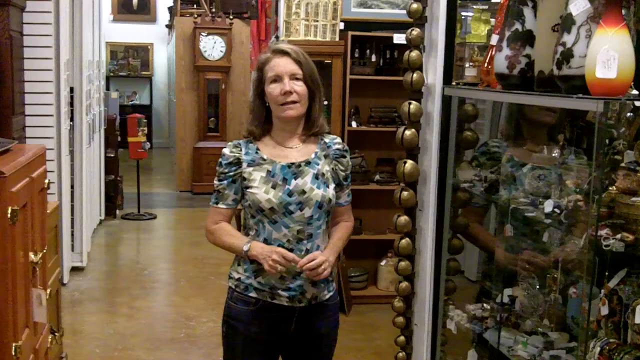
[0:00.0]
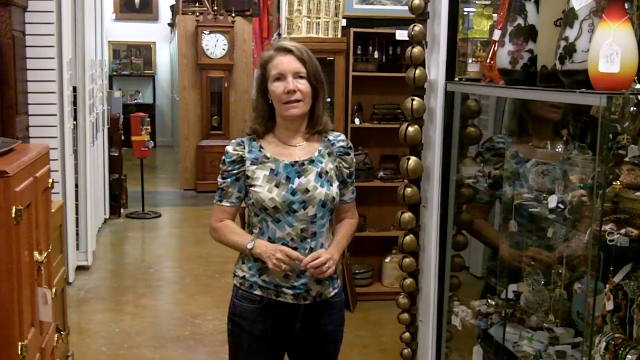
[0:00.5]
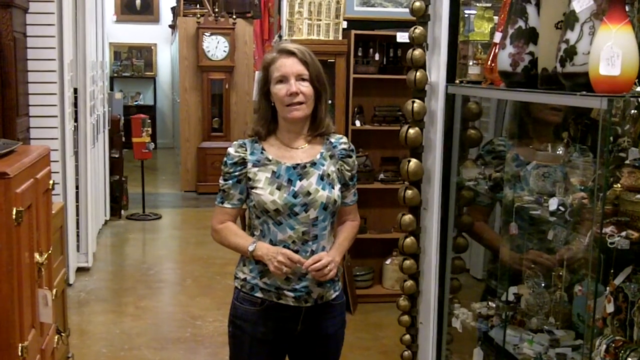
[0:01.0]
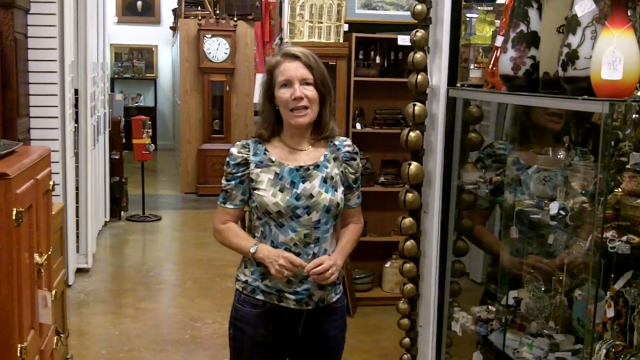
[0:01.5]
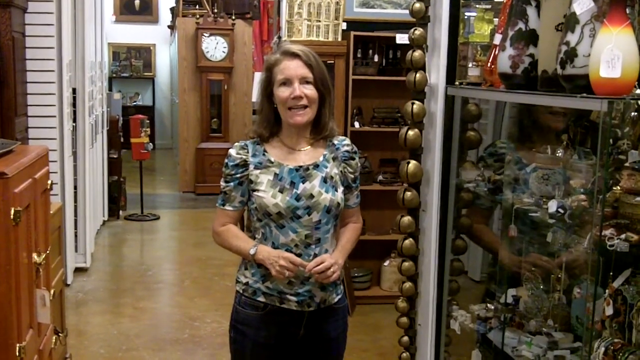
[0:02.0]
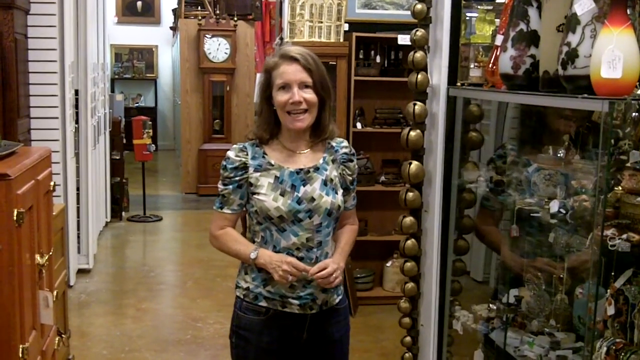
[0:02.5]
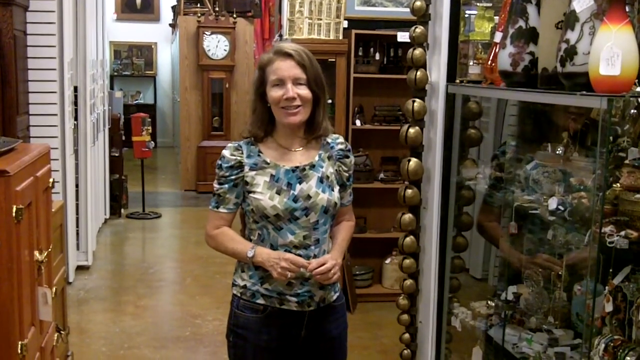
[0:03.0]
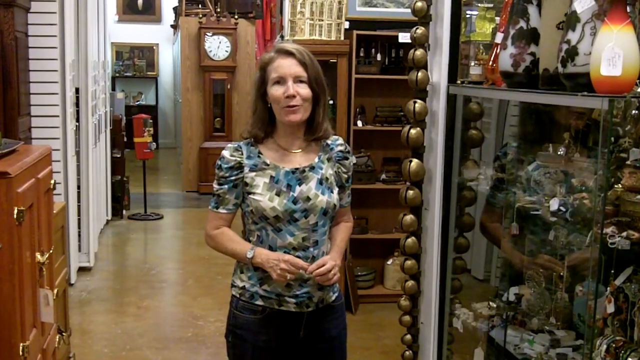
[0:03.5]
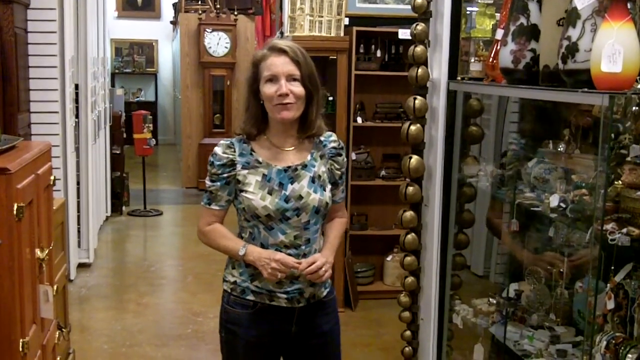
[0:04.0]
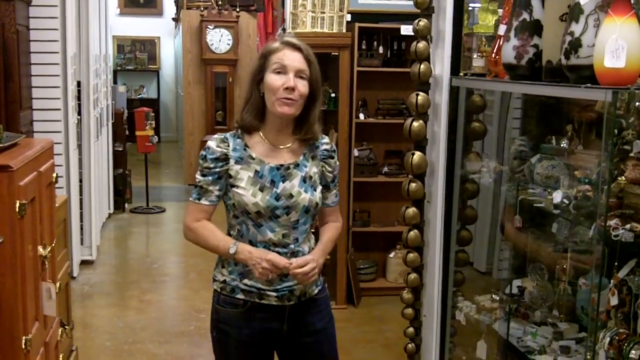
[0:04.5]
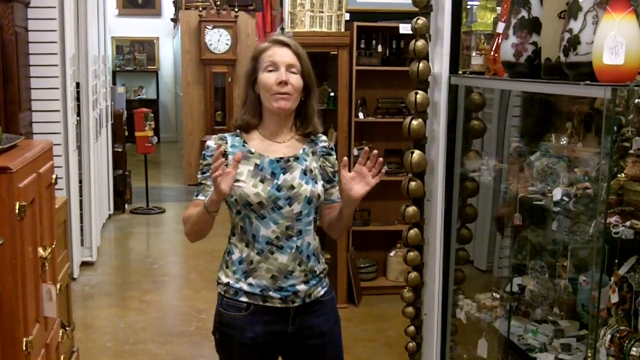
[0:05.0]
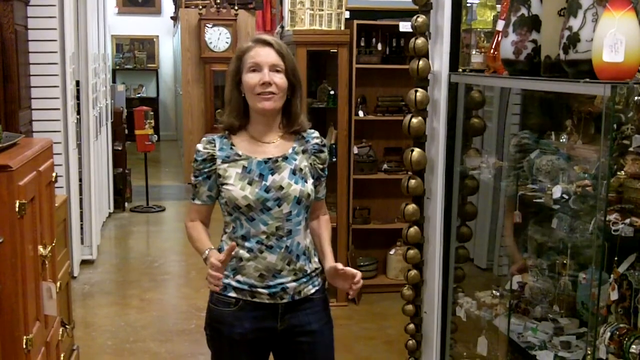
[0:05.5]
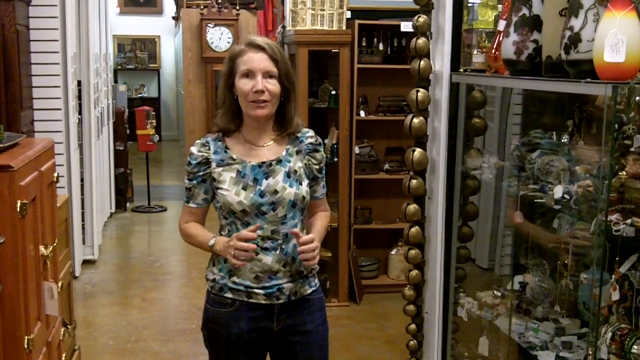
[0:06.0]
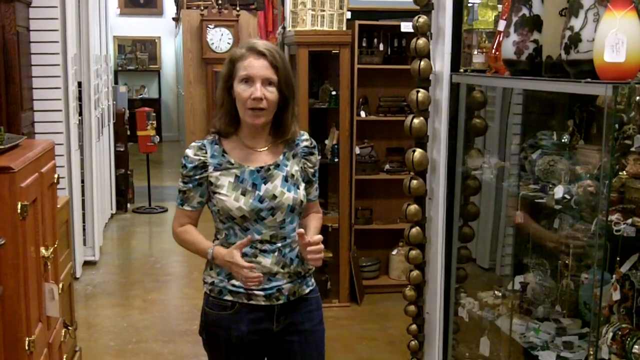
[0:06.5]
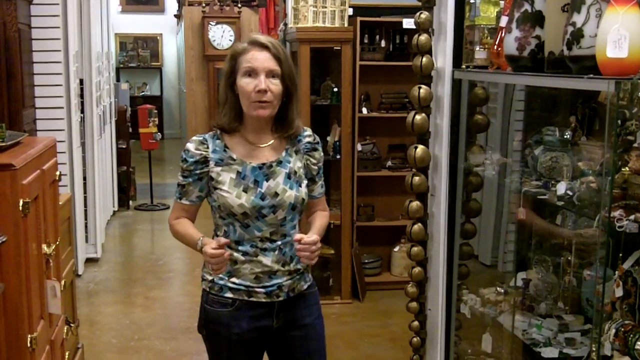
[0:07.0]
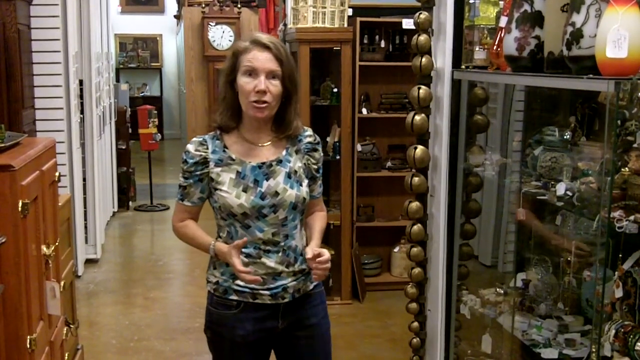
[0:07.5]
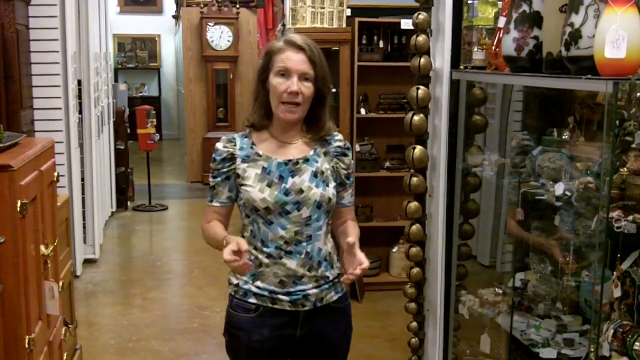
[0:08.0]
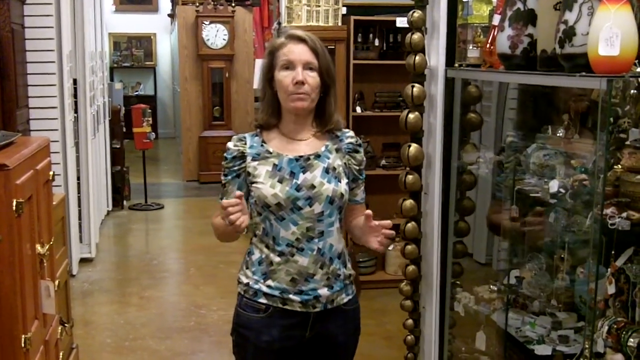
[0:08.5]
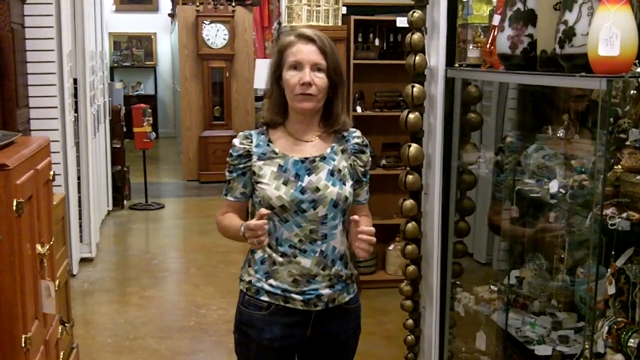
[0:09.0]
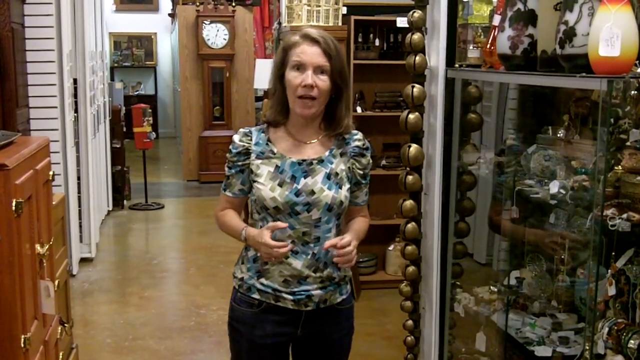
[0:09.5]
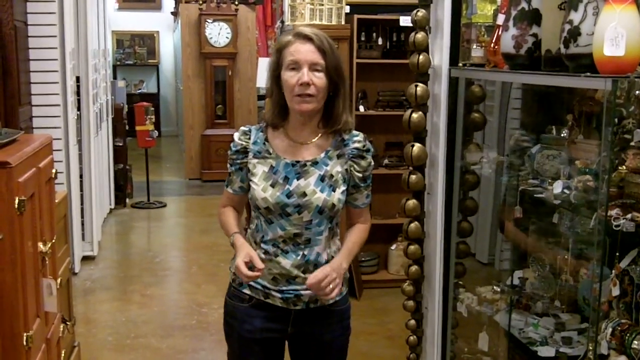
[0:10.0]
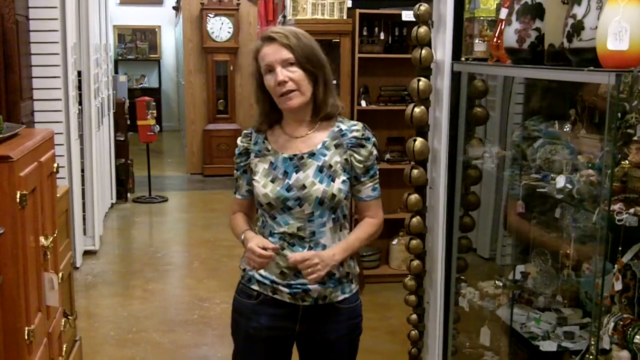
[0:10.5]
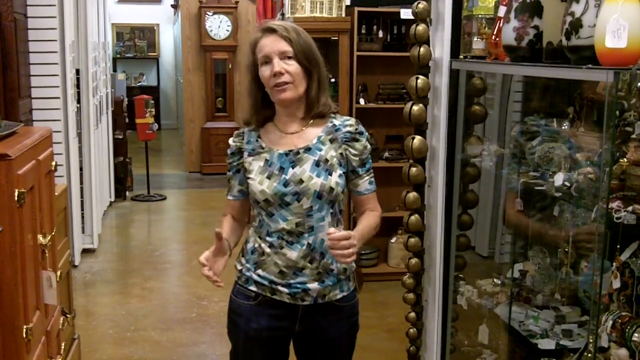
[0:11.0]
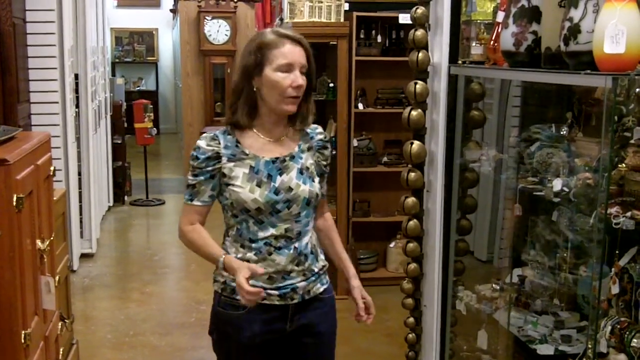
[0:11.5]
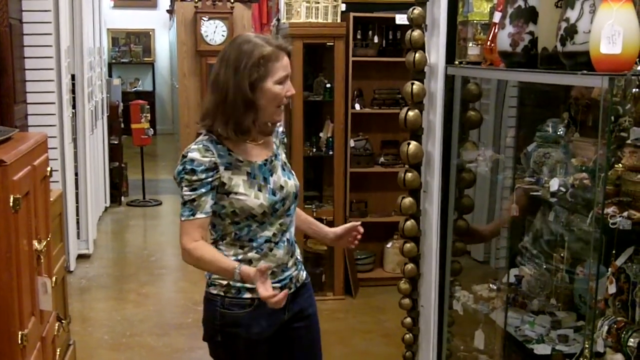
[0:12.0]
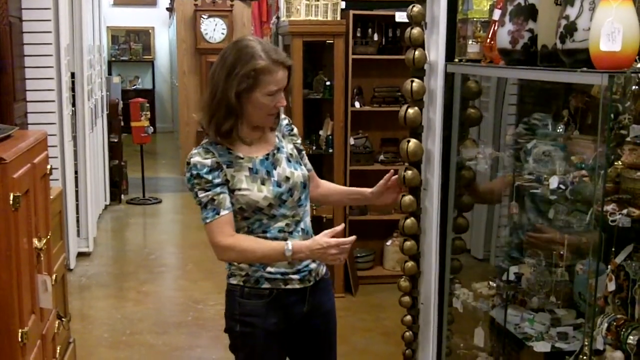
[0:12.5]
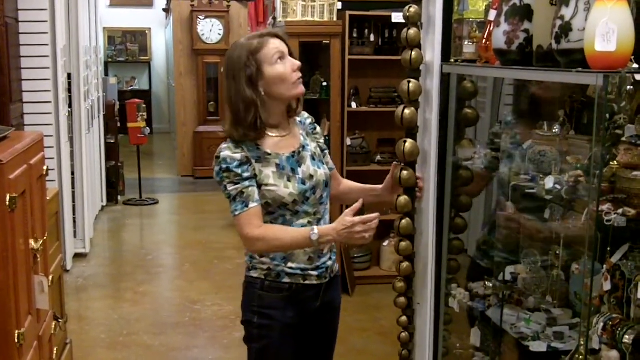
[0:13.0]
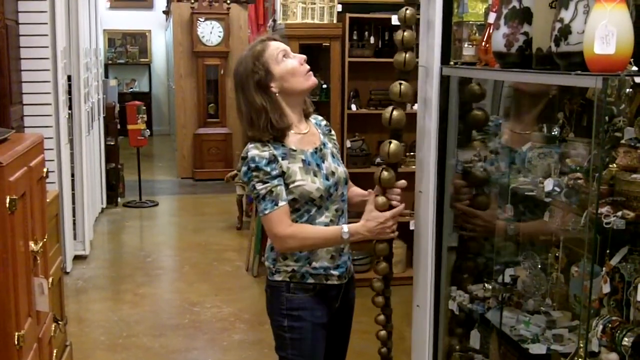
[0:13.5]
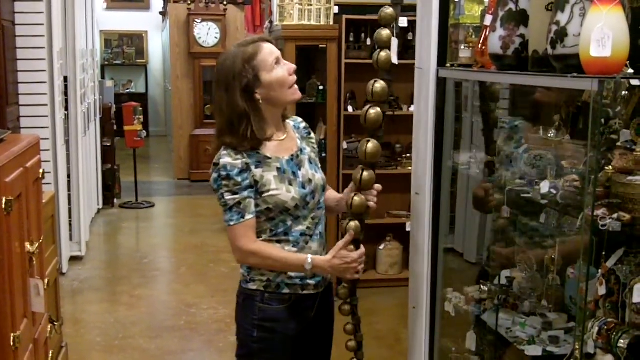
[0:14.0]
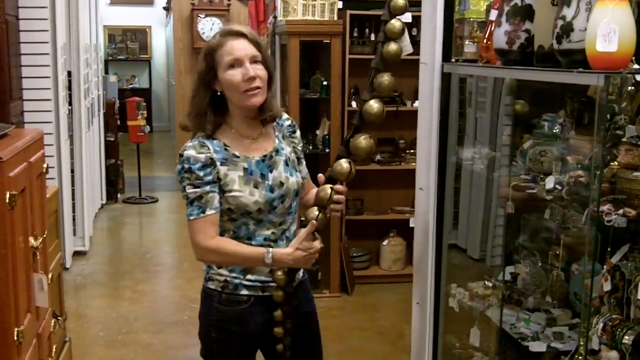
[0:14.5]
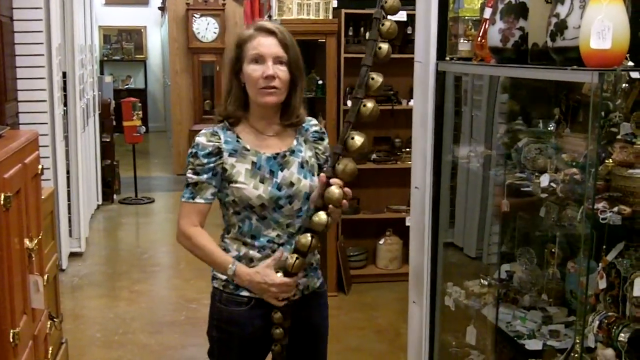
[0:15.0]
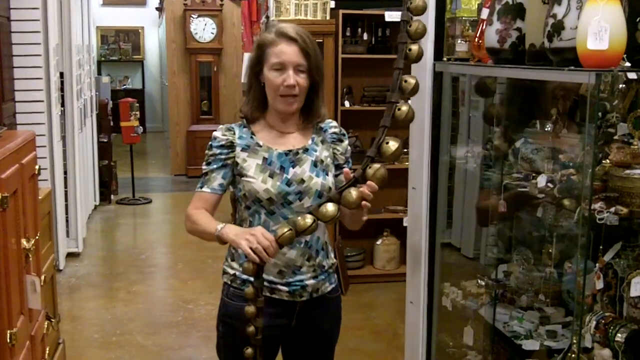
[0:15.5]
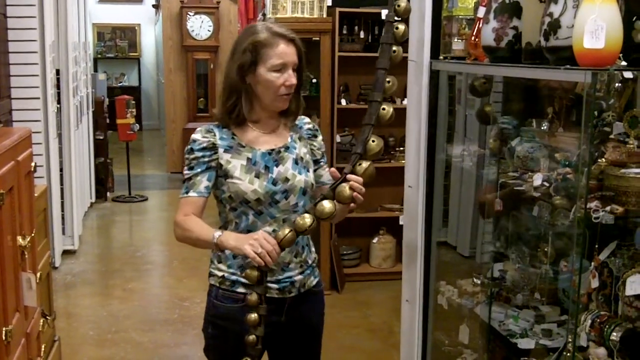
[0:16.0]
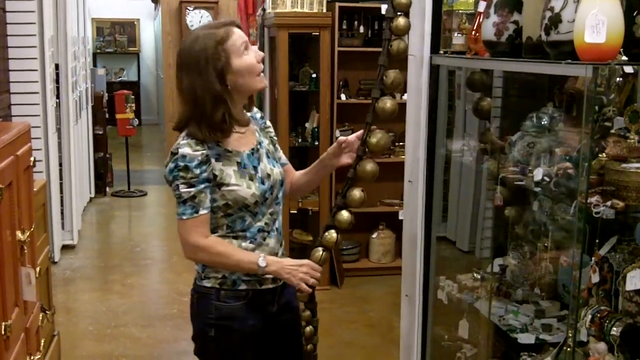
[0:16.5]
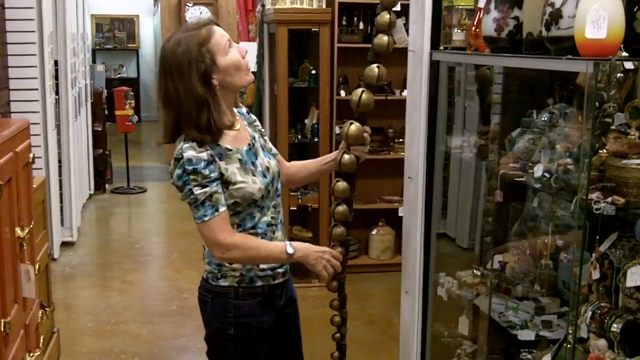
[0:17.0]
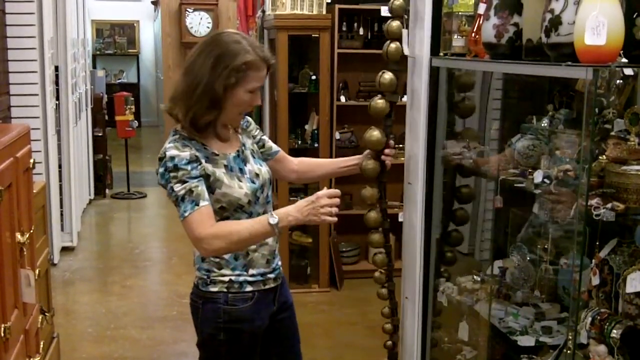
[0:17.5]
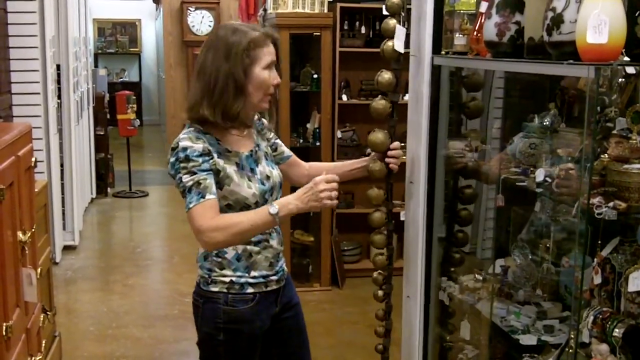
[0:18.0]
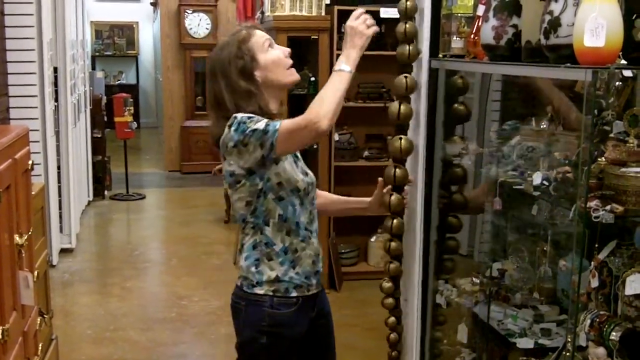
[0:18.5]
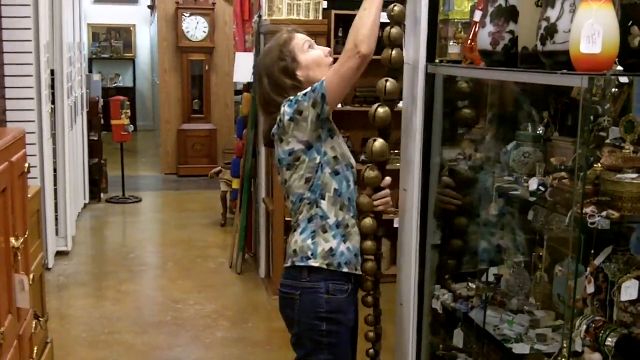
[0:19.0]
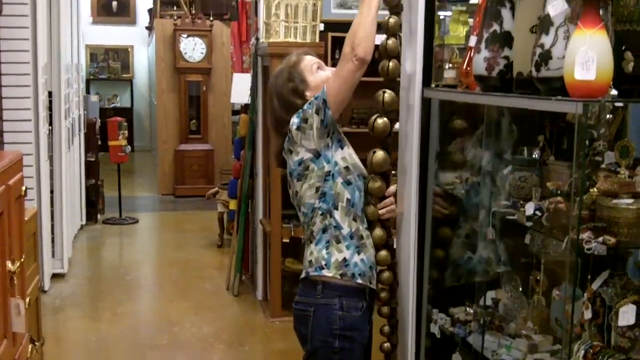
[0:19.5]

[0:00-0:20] In an antique shop, a woman explains things with her body language, making little gestures. She wears a floral blue top and starts off facing the camera directly, hands together in front of her. She then raises her hand slightly, as if emphasizing something. To her right is a brown cabinet with gold handles and a darker brown structure on top. To her left is a glass display cabinet with multiple items inside and a large orange and white, vase-like object on top. The lighting is bright, giving the setting a clean, shop-like atmosphere. In the background there is a long clock and display cases filled with items, and a painting is on the back wall, which is painted white. She slightly raises her hand to pick up a chain-like object with different metal balls on it.